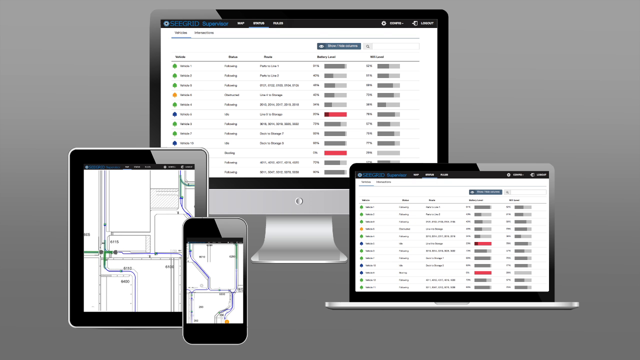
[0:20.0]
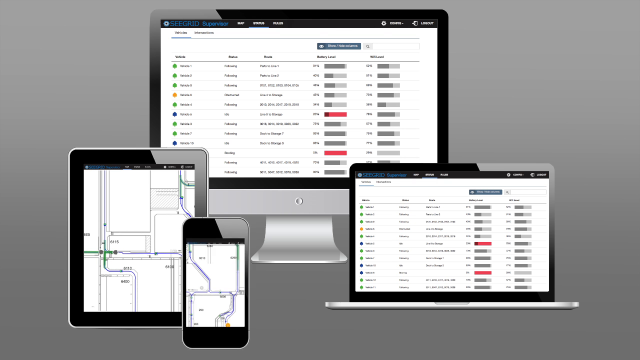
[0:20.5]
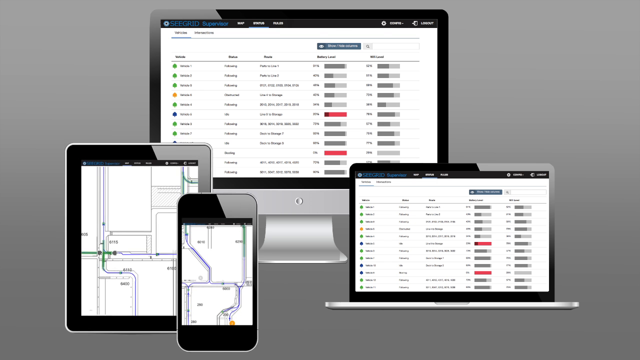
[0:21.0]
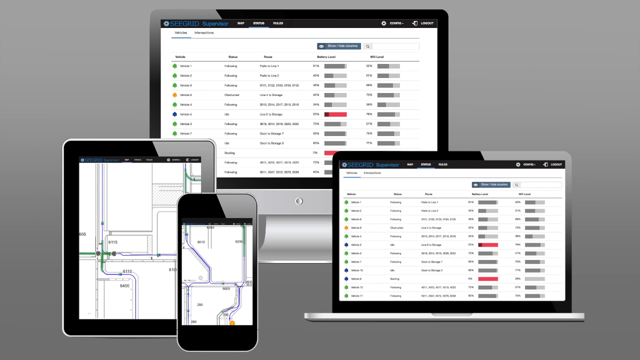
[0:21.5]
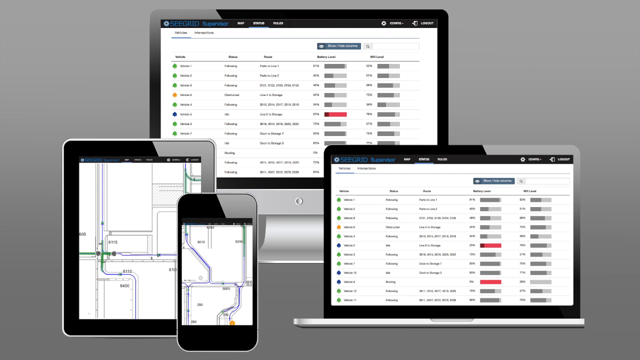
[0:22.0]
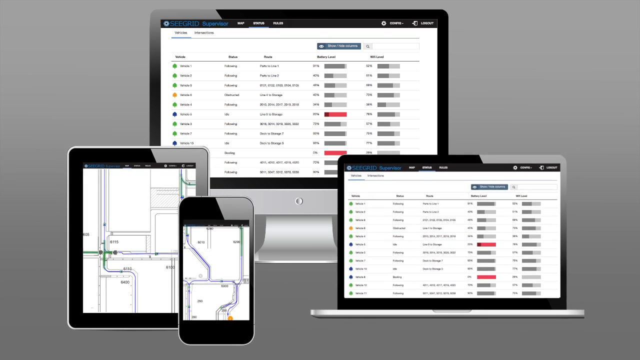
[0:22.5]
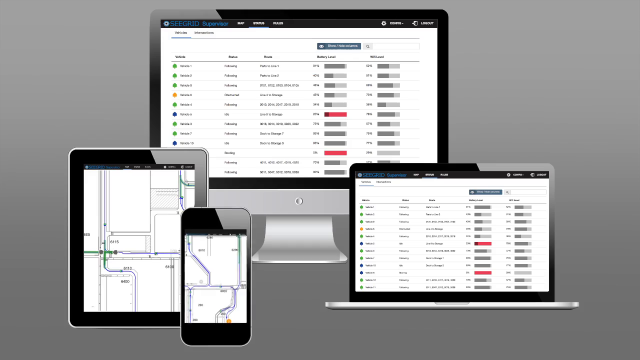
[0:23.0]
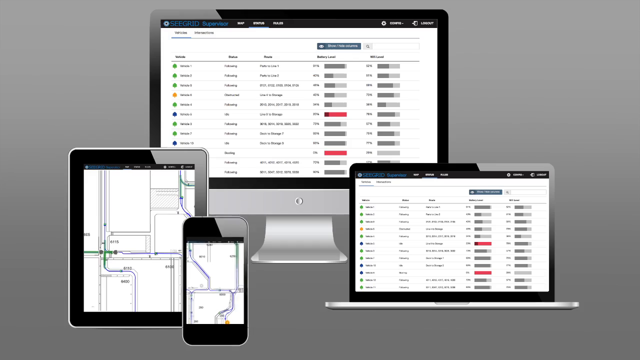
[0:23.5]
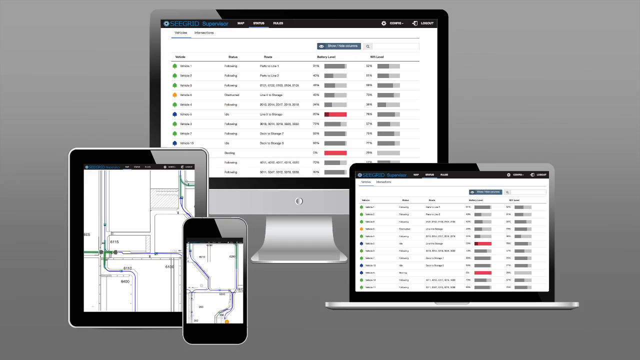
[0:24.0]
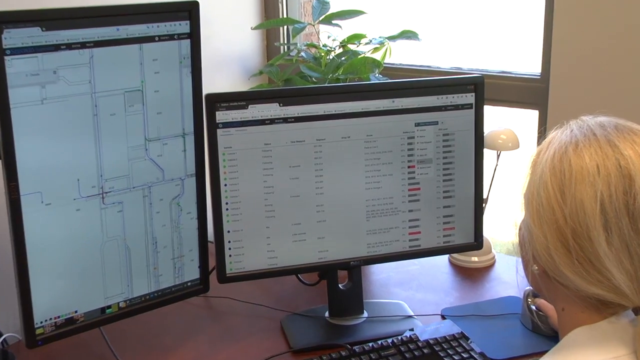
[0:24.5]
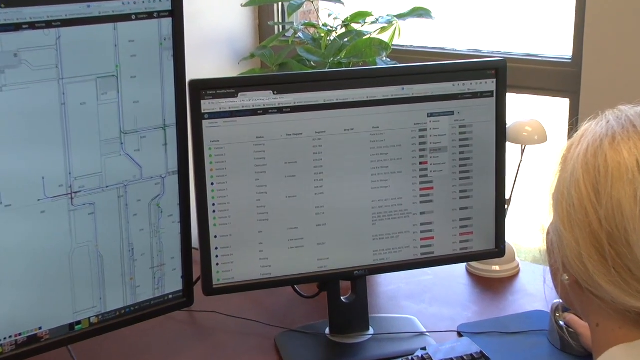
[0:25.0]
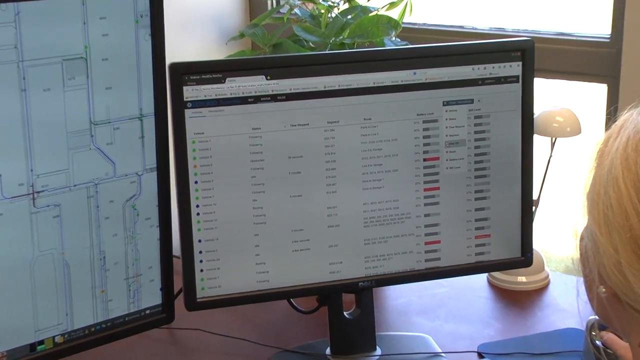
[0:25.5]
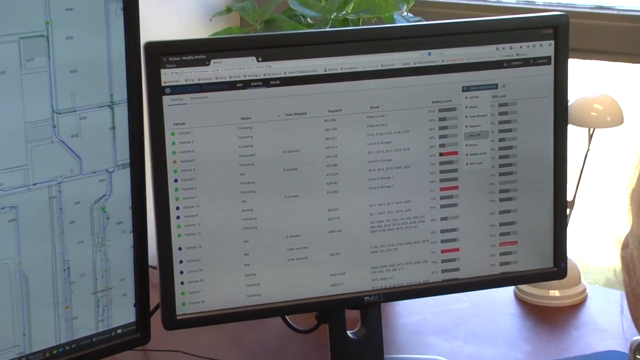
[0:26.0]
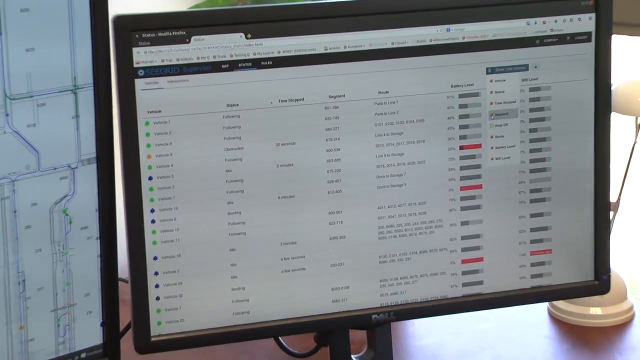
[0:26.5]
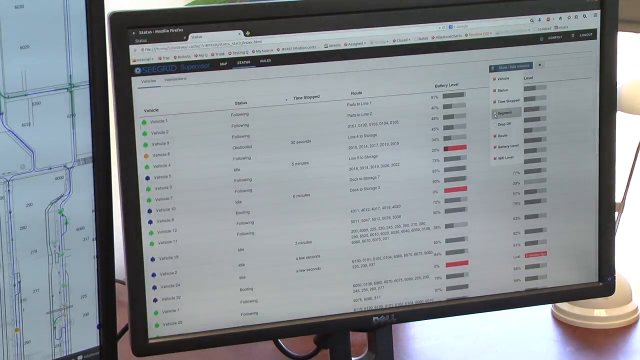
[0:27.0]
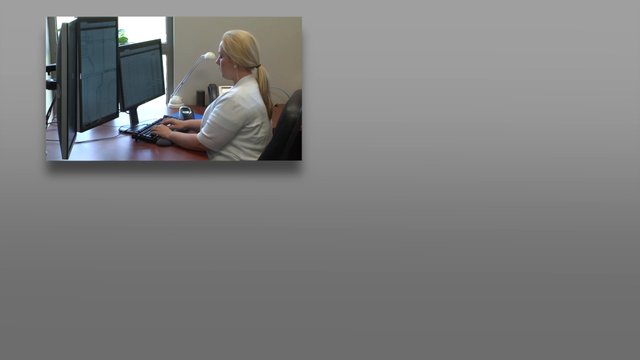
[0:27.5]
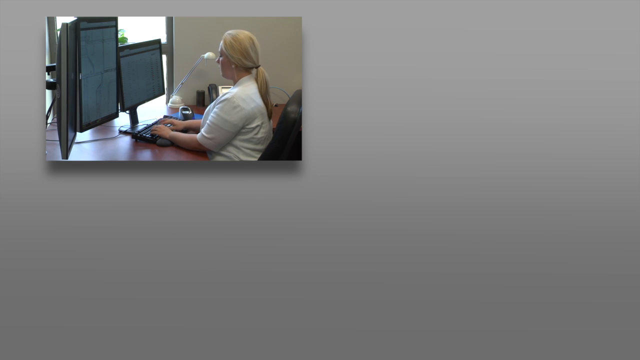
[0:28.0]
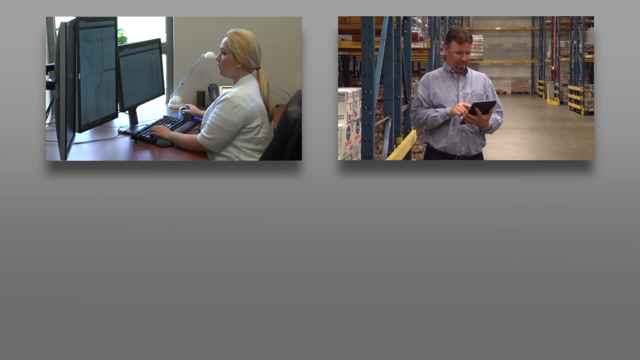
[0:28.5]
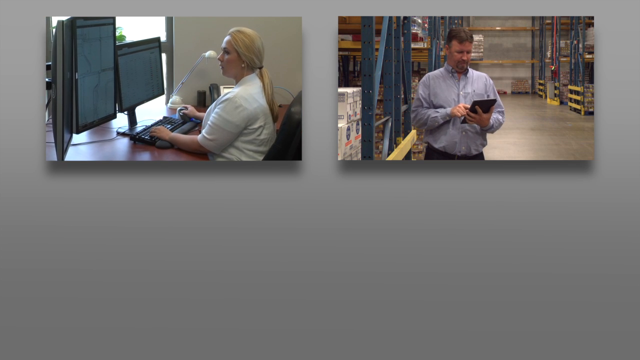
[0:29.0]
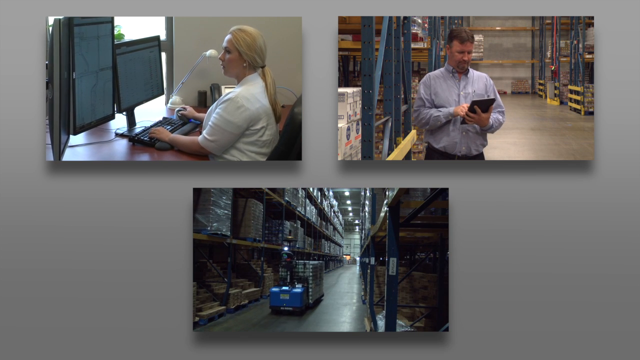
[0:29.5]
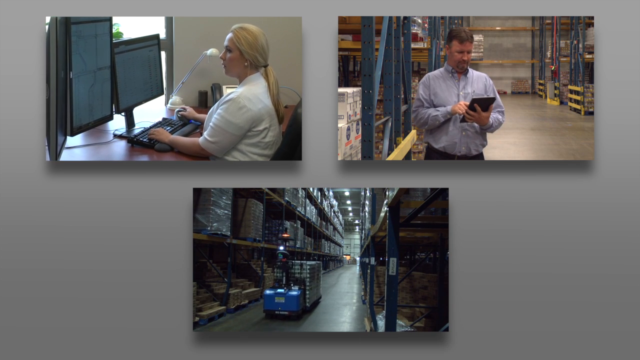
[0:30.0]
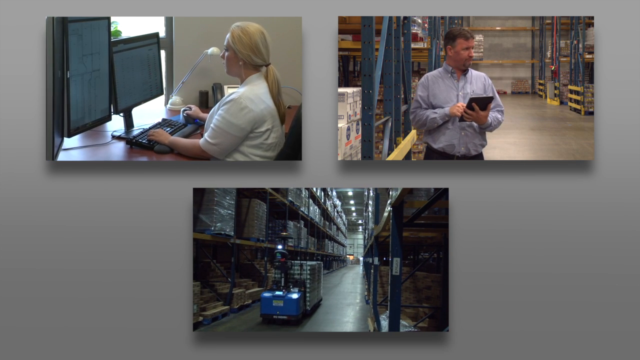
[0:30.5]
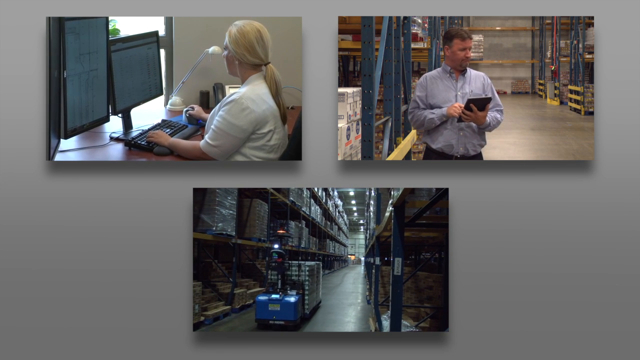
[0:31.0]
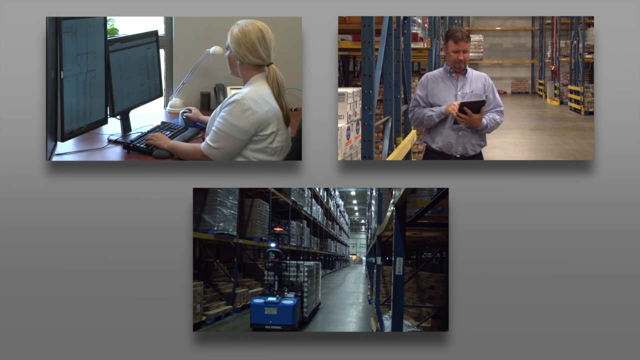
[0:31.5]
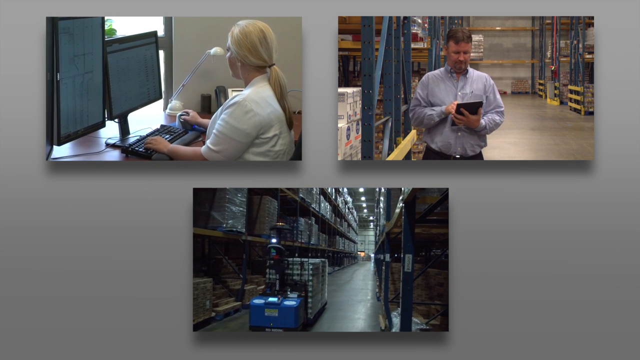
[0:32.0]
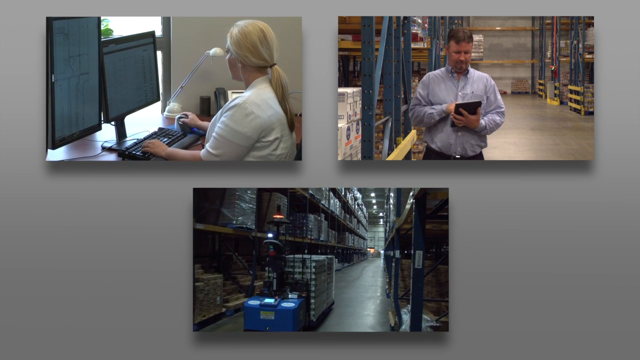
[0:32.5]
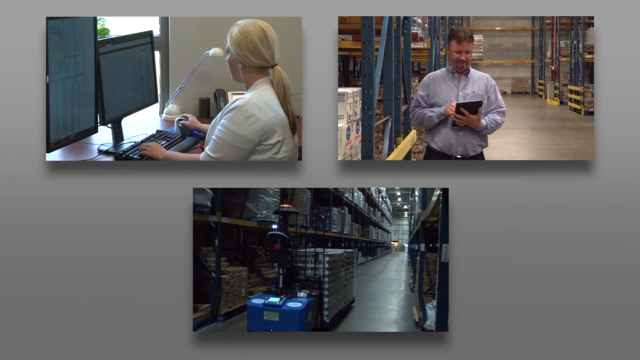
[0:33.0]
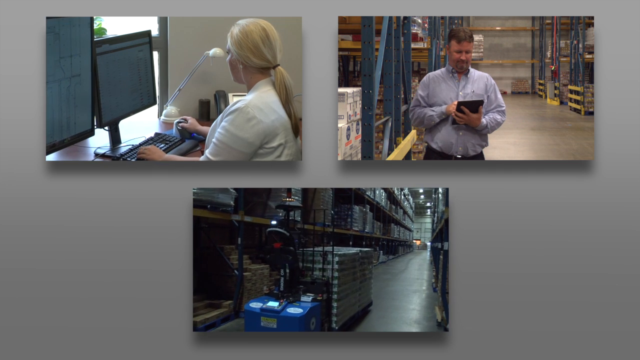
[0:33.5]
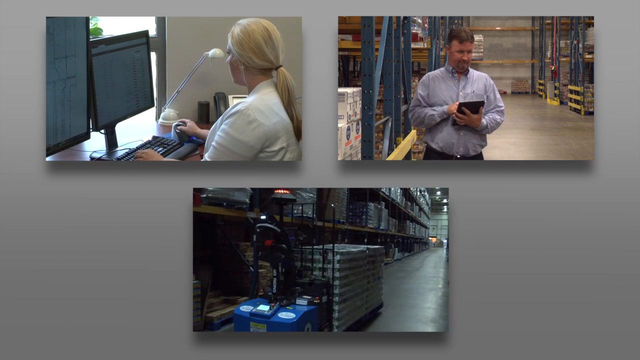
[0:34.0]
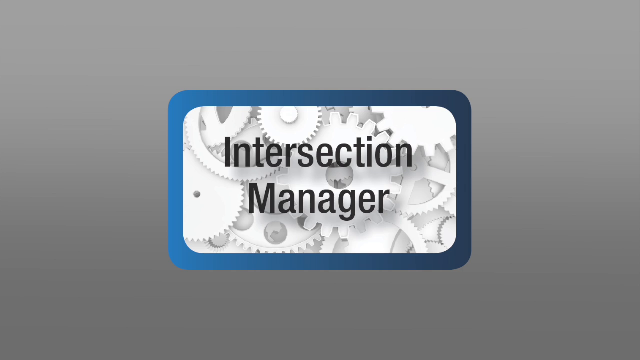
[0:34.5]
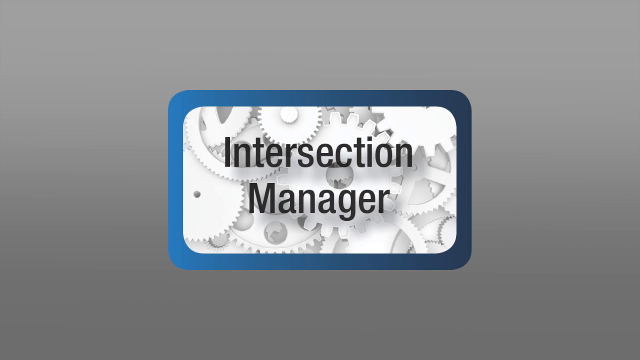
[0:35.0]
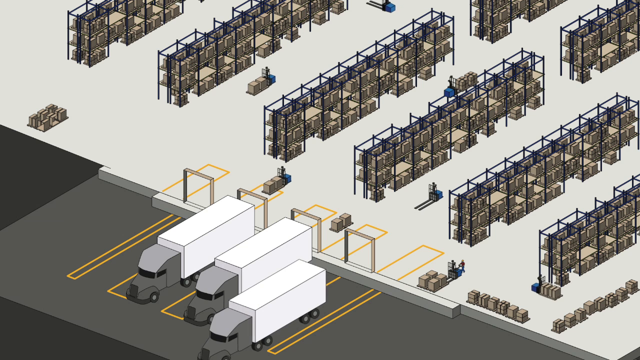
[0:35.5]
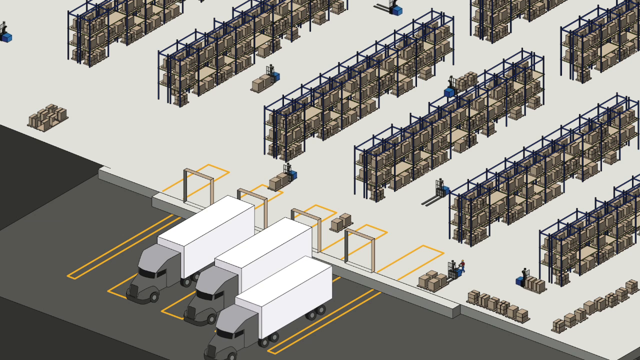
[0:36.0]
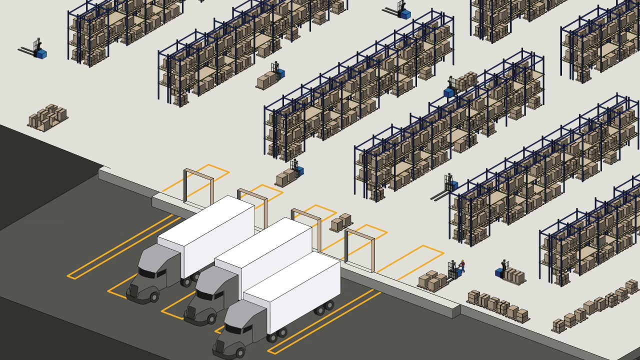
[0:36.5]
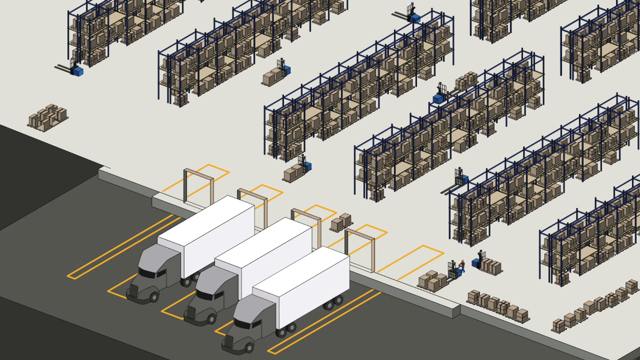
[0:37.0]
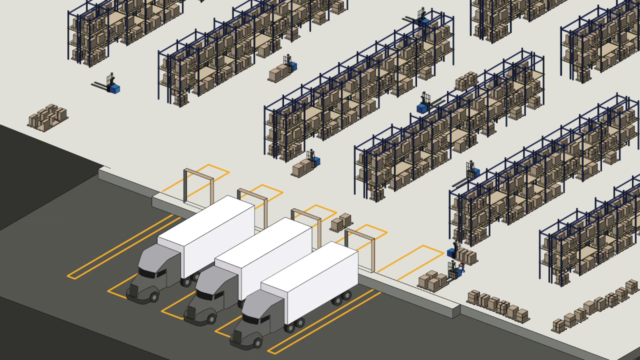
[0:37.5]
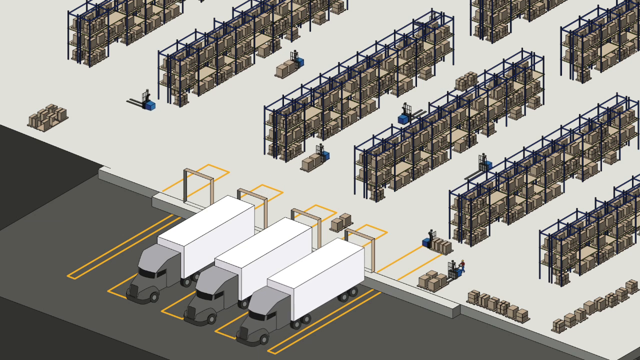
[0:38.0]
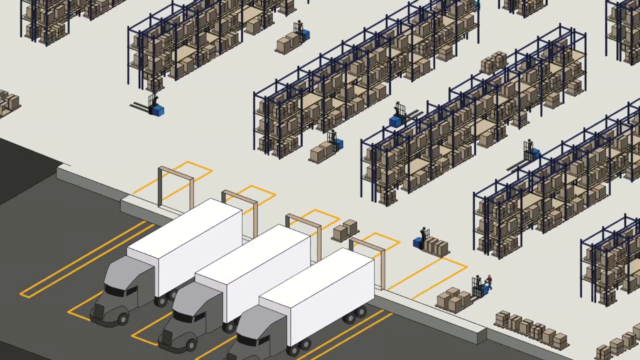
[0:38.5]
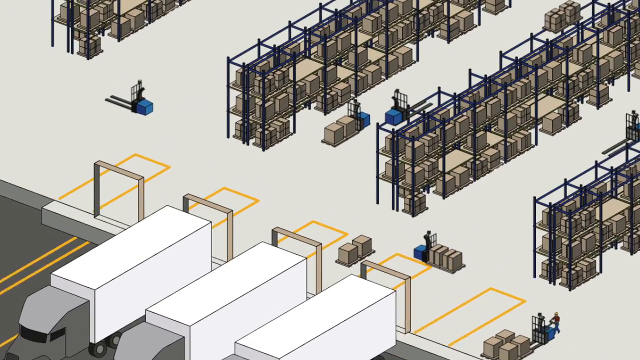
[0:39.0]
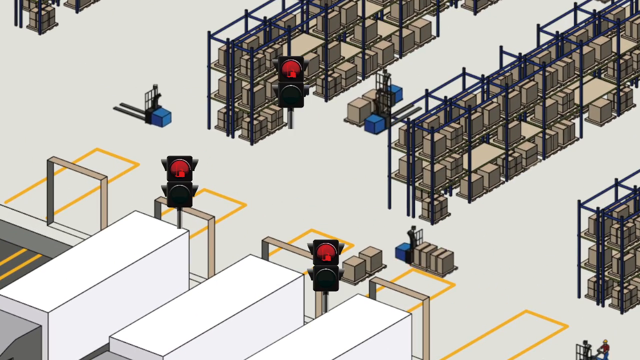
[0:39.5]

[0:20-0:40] The advert shows how the three things are managed, starting with the fleet status. Three subjects appear: a lady on a computer doing something, a man in something like a store, and a forklift being driven. An animation follows of forklifts in what looks like an aerial view of a store with people working in it. The screen shows the fleet status and what will be happening, presented by the company Seagrid. The background on which all of this is presented is a solid grey color, and there are some red highlights on the gadgets displayed.